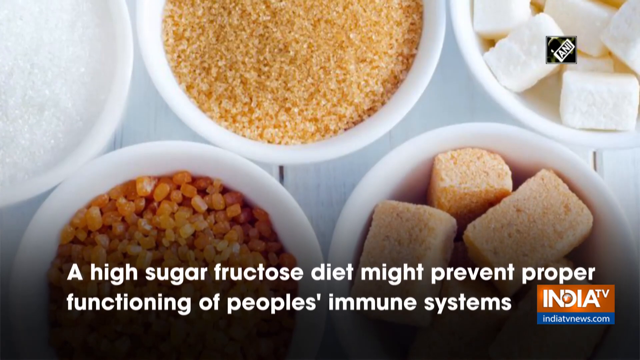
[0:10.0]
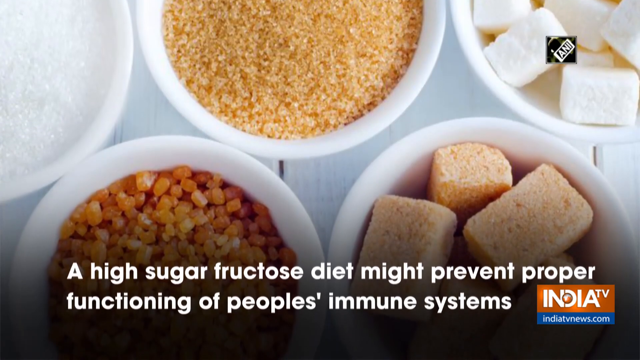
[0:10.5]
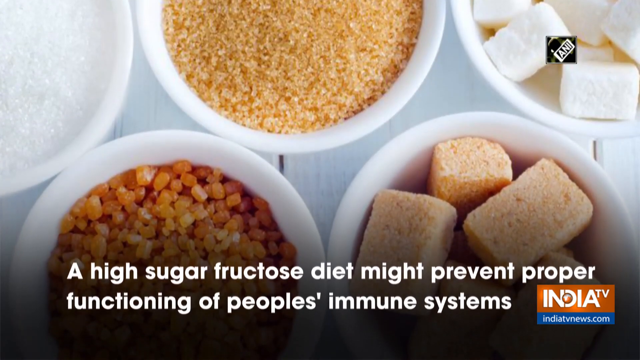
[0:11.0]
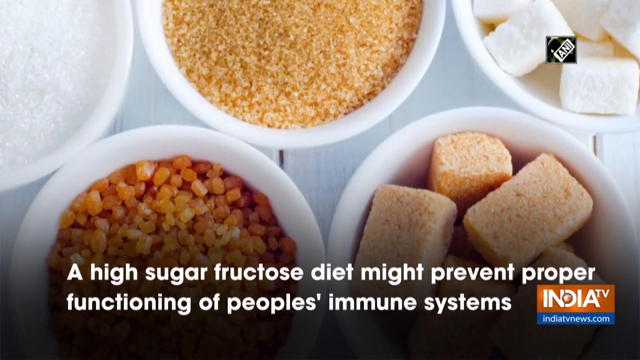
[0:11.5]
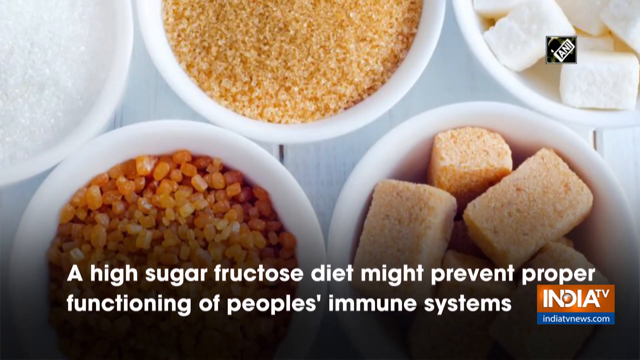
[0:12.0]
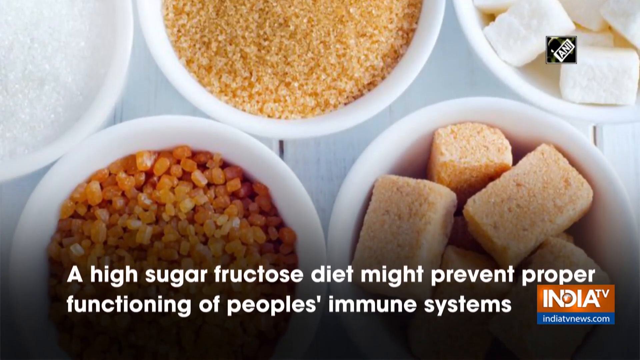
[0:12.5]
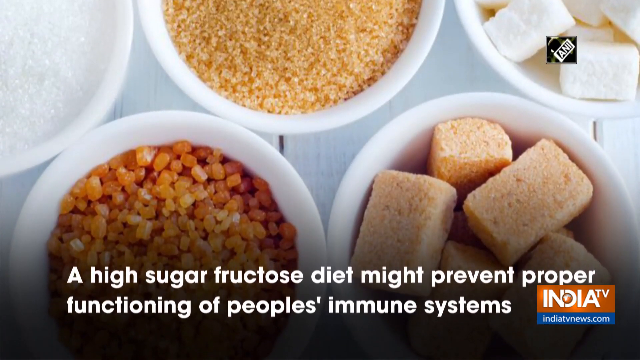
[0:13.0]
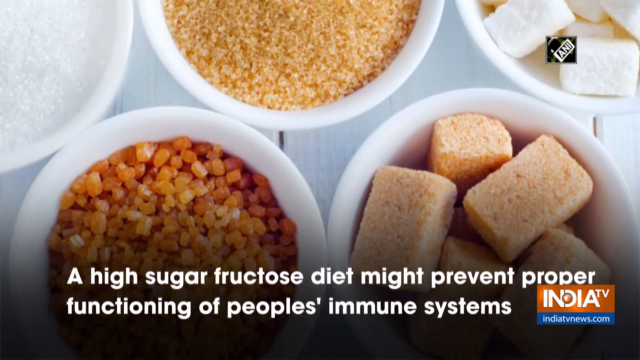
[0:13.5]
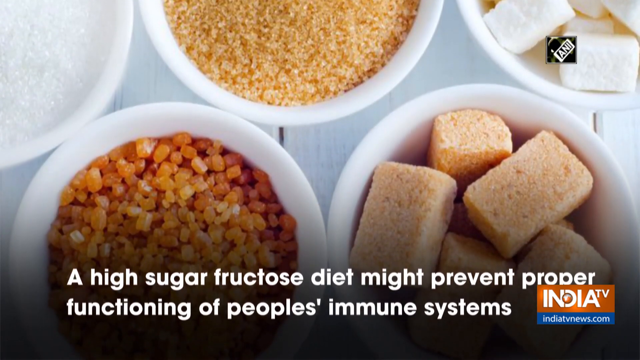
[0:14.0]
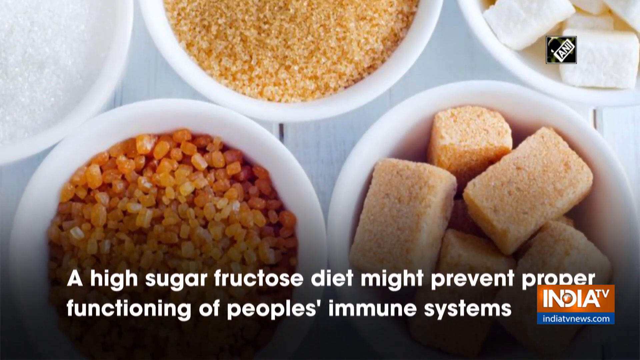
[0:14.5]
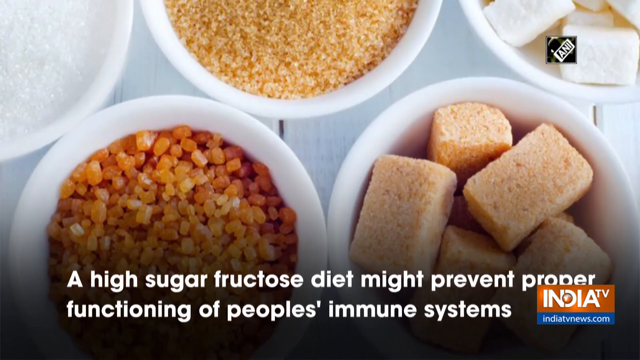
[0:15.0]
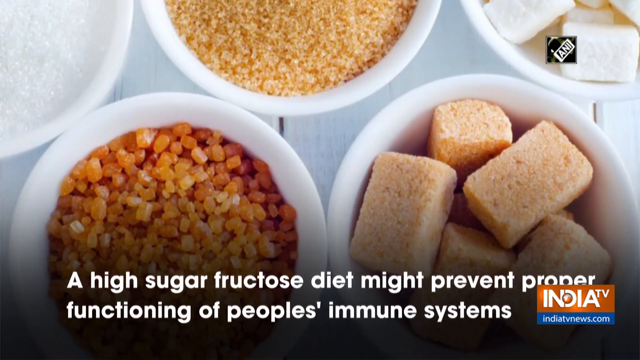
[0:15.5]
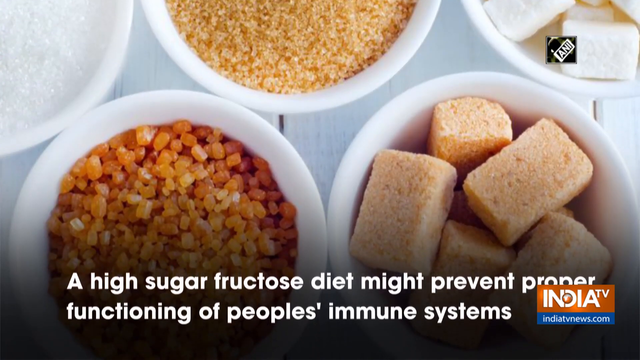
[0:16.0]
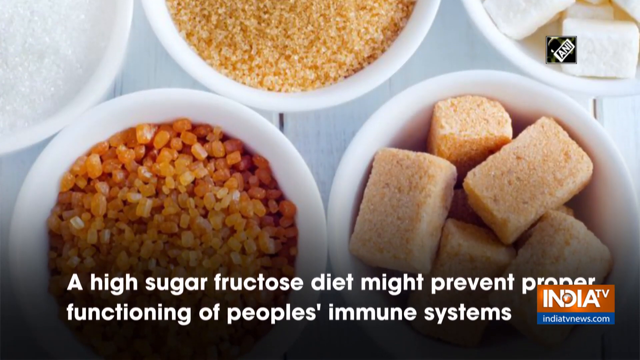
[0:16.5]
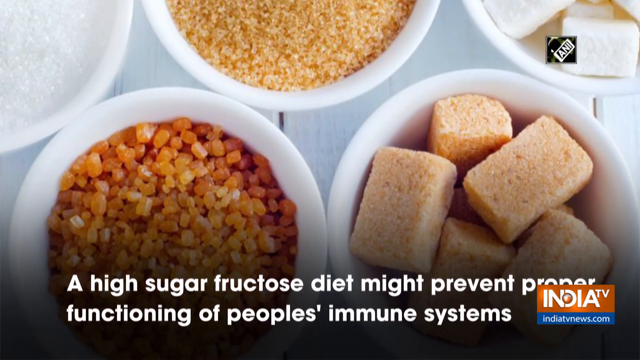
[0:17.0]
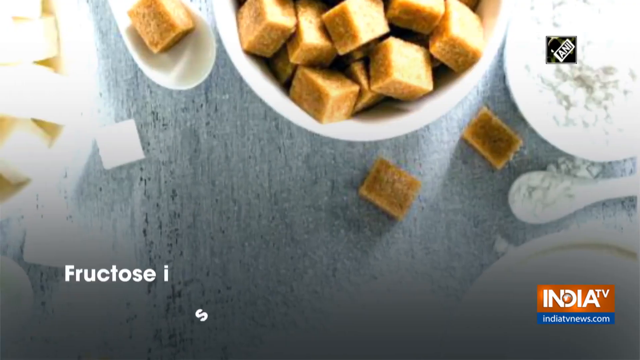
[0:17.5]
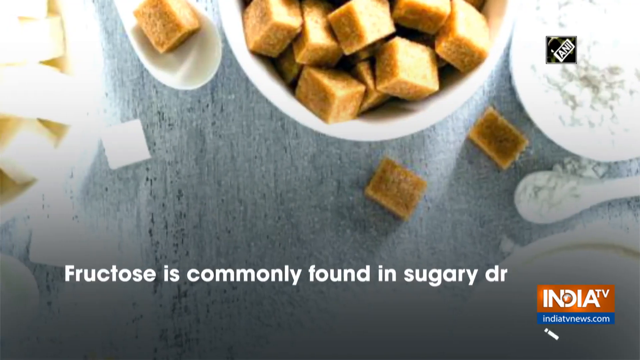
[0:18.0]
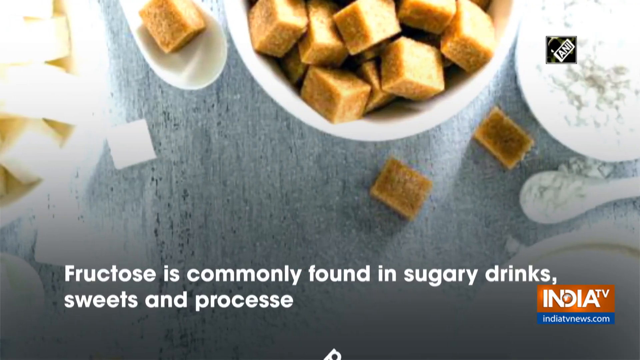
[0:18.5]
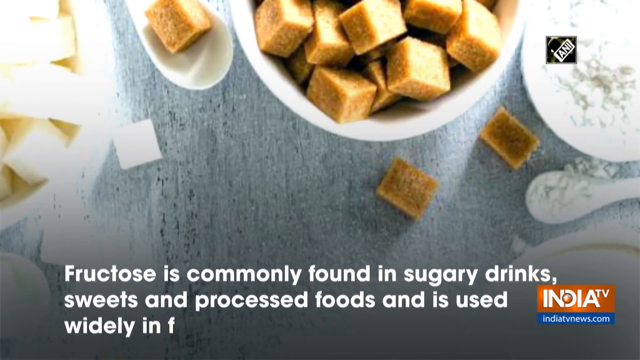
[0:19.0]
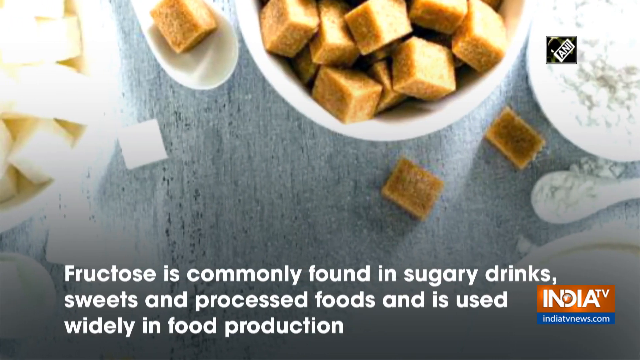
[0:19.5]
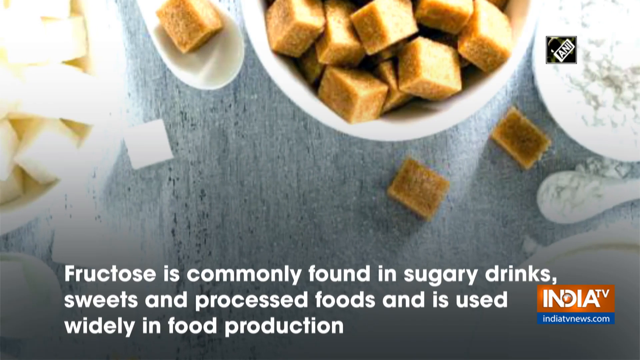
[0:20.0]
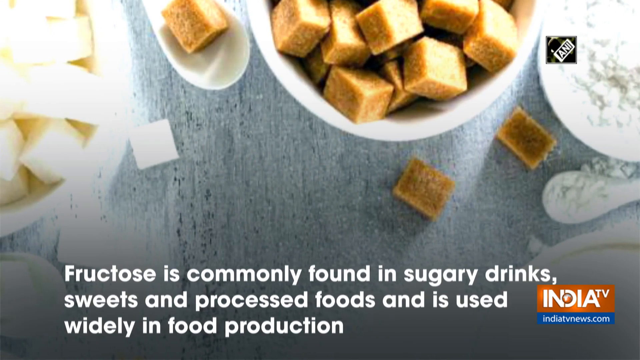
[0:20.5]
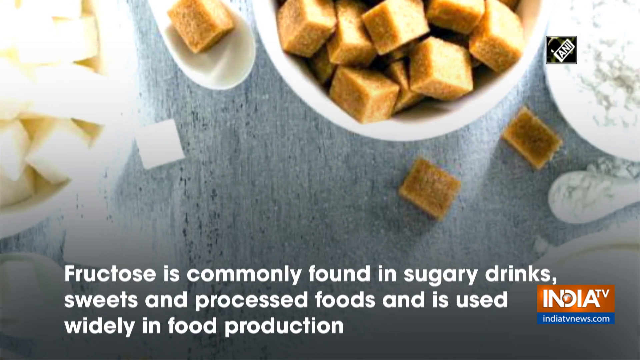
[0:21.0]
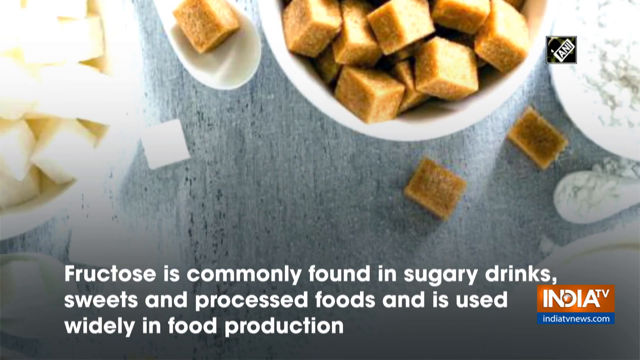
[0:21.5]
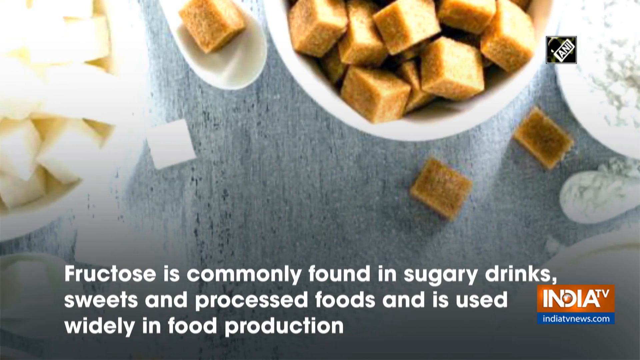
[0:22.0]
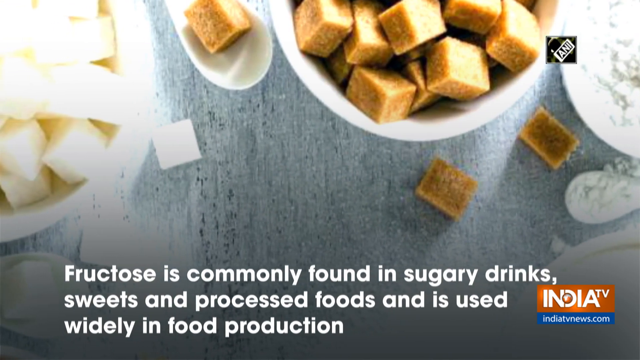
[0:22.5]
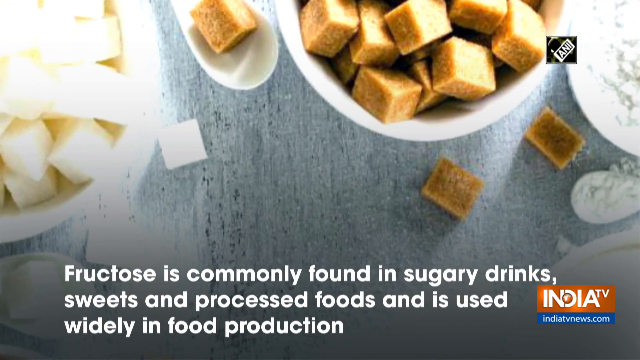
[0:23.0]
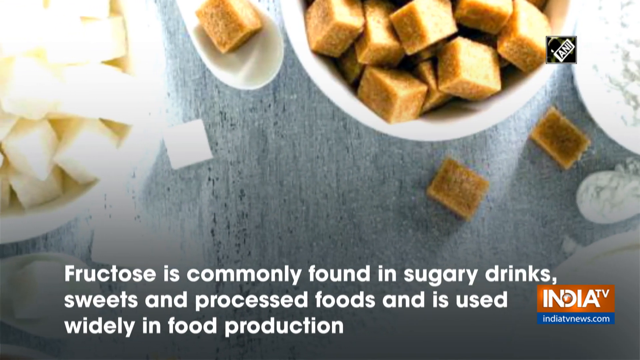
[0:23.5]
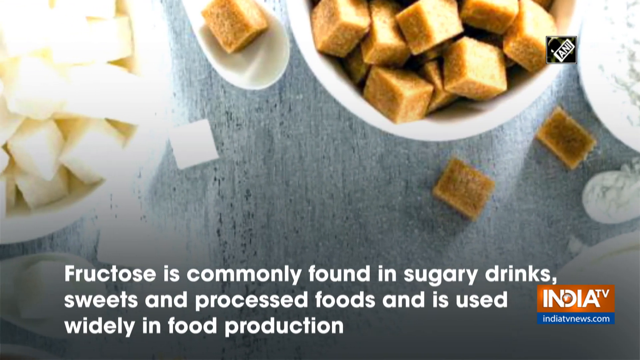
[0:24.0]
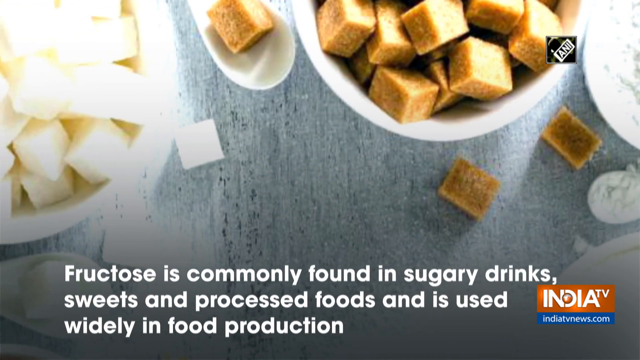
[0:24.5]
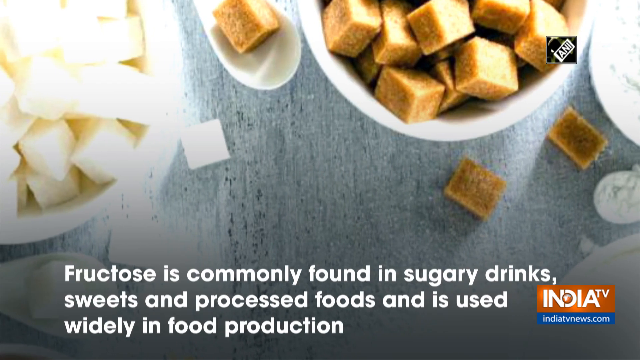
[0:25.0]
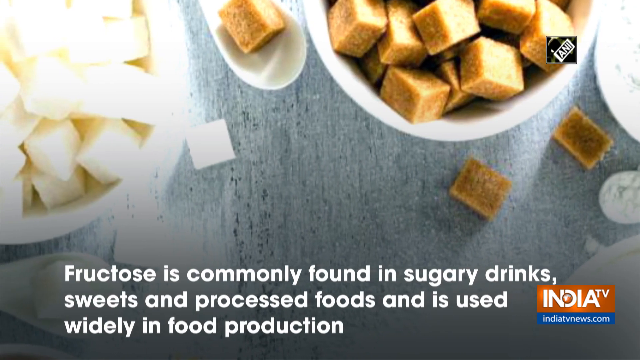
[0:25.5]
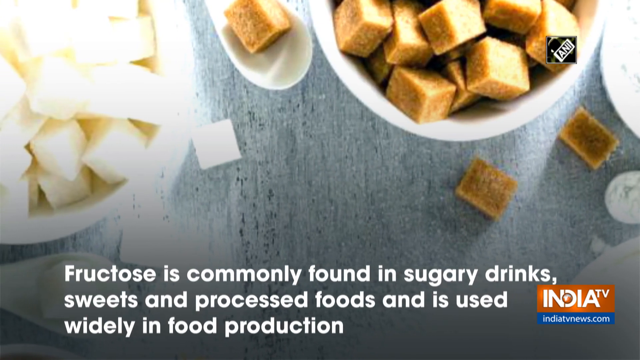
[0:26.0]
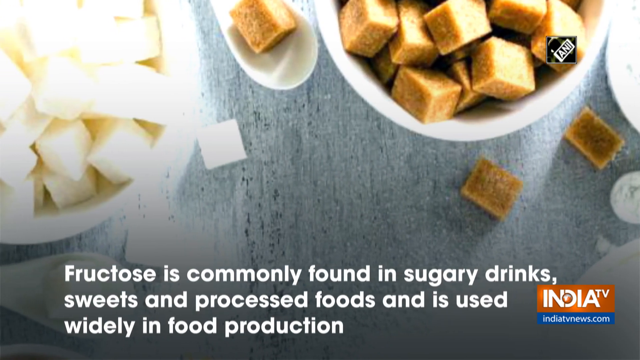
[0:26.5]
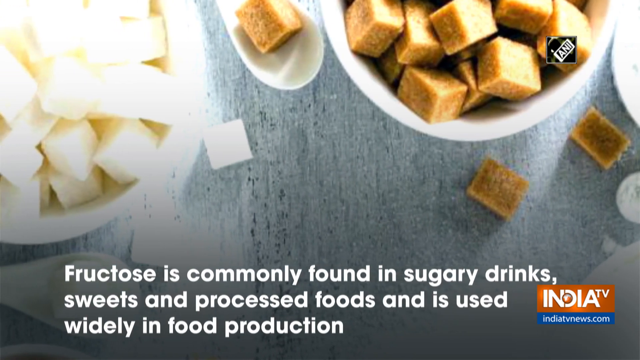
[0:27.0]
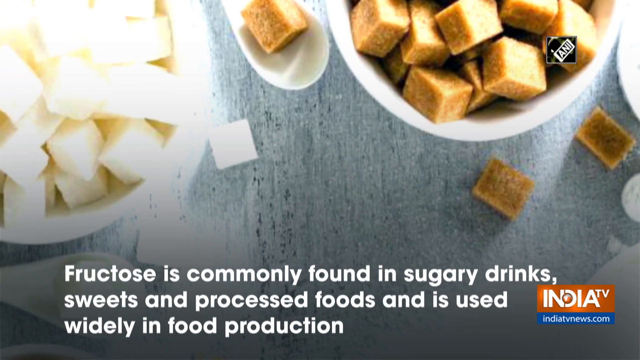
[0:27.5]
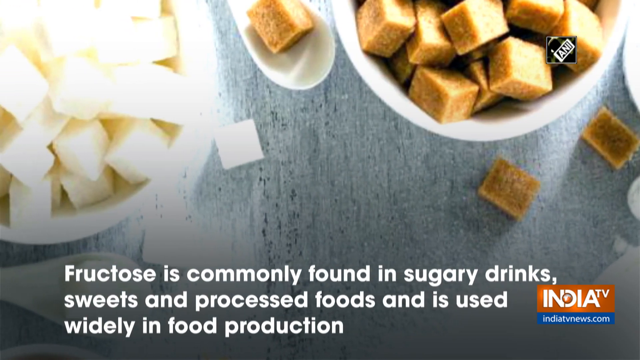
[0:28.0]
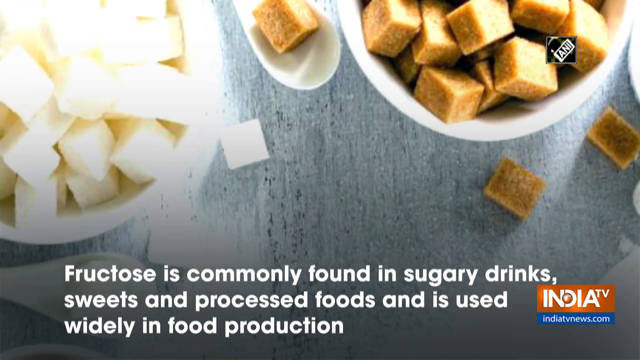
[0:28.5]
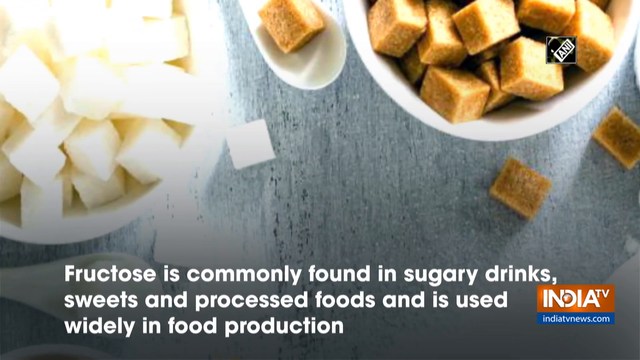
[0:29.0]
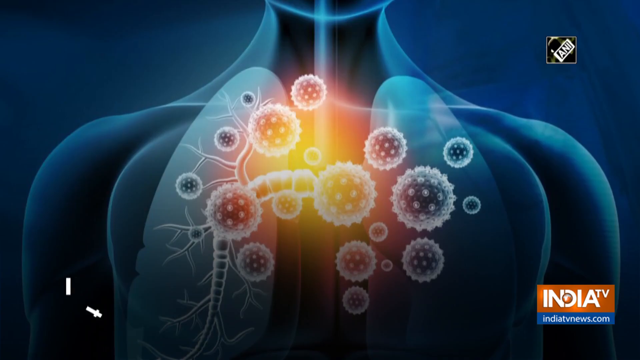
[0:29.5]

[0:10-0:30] Close-up shots show five white bowls, each containing a different food product, with colors ranging from white and tan to red and pink. Text at the bottom of the screen reads "a high-sugar fructose diet may prevent proper functioning of people's immune systems." In the lower right-hand corner, the words "India TV" are written in white letters against a red backdrop. The camera then pans to a different screen, where words at the bottom read "fructose is commonly found in sugary drinks, sweets, and processed foods. And it's used widely in food production." As these words are displayed, the camera pans from right to left, revealing various foods sitting in white bowls. At the very end, a final screen shows a computer-generated image of a human body showing parts of the human anatomy, and the words "it is associated with obesity" flash at the bottom of the screen.